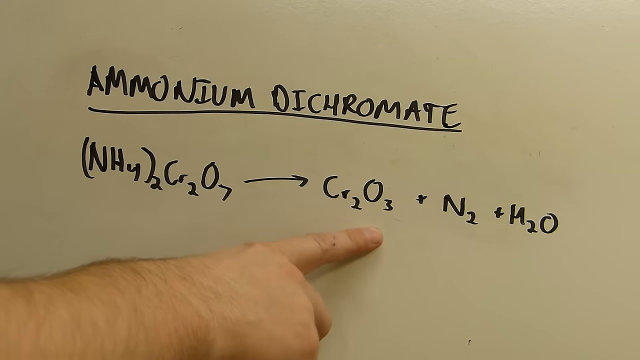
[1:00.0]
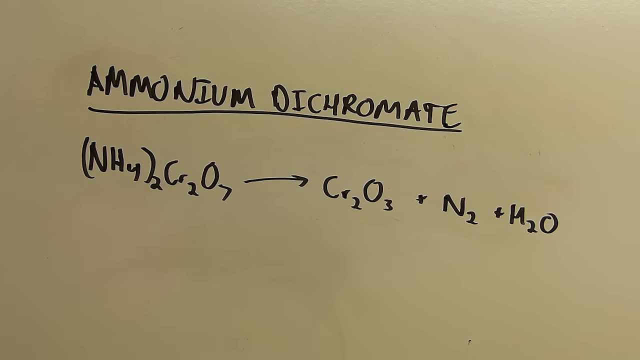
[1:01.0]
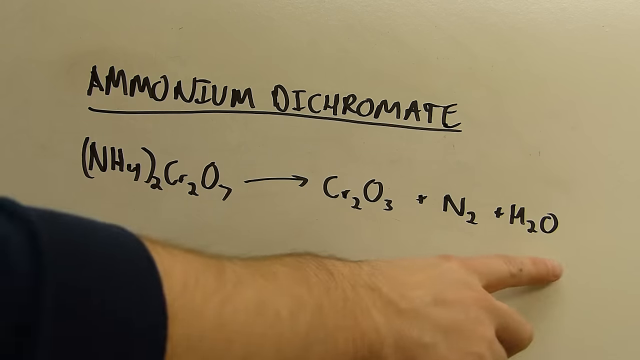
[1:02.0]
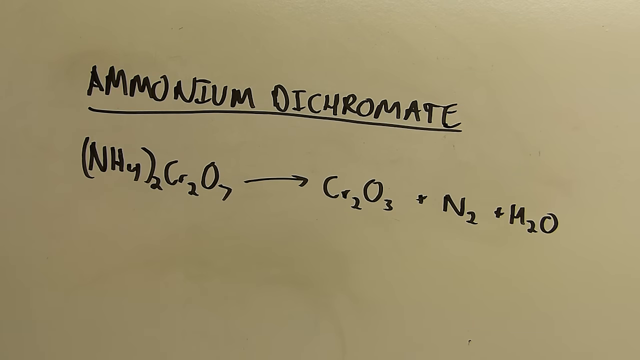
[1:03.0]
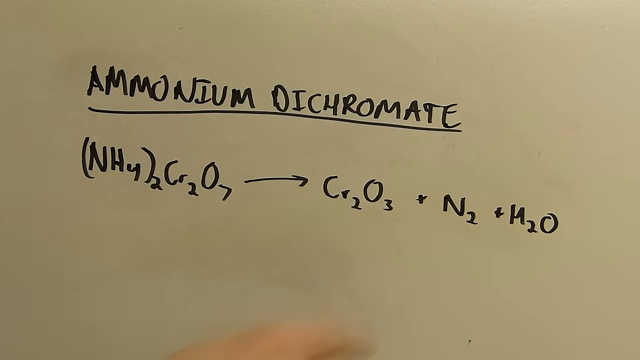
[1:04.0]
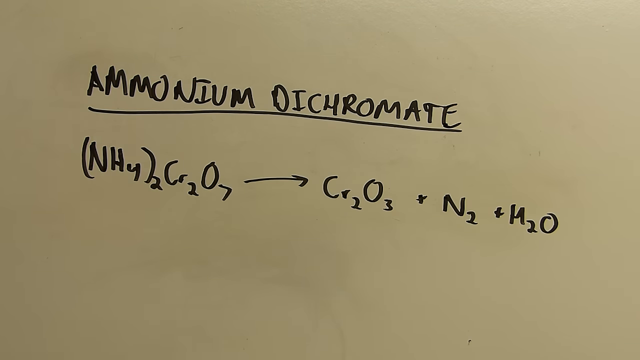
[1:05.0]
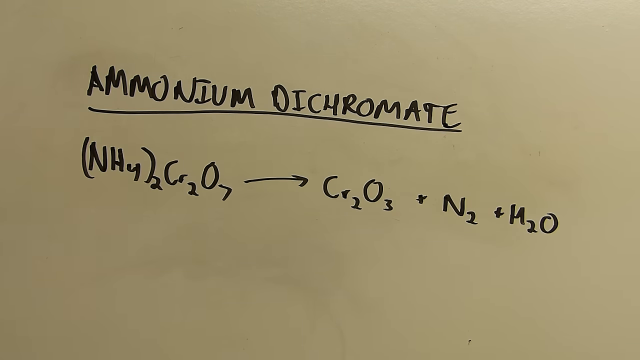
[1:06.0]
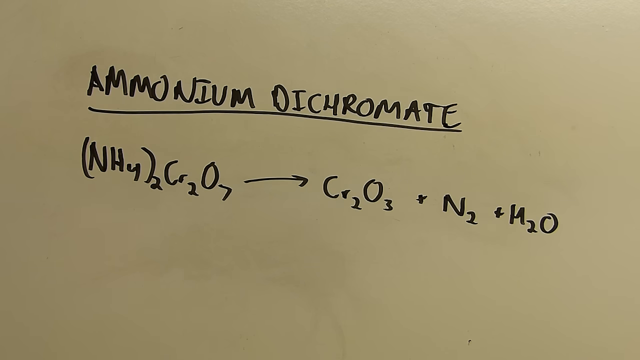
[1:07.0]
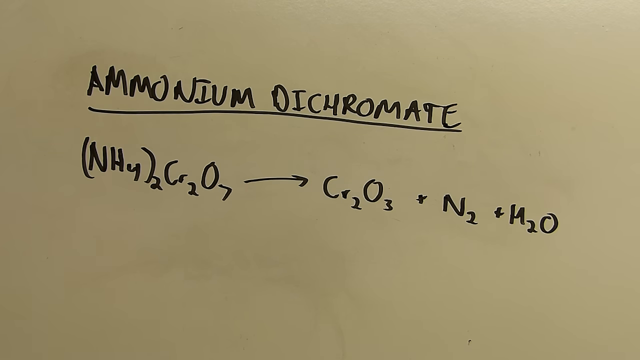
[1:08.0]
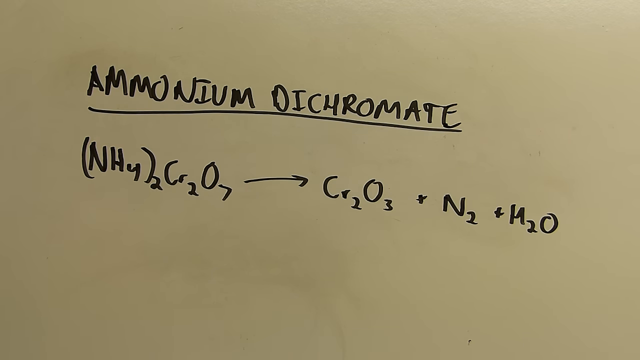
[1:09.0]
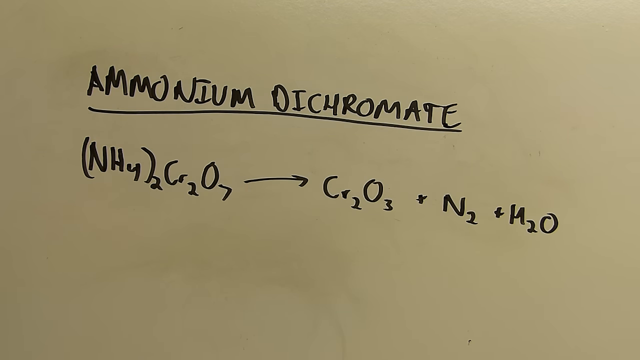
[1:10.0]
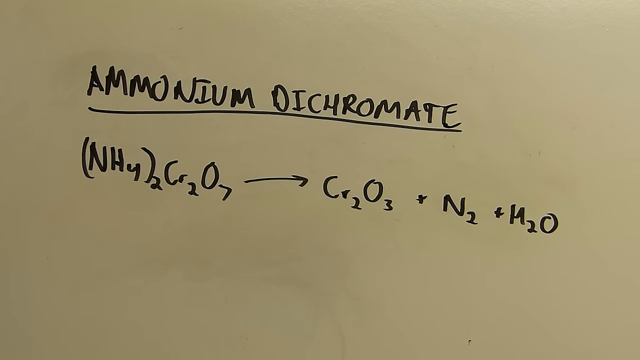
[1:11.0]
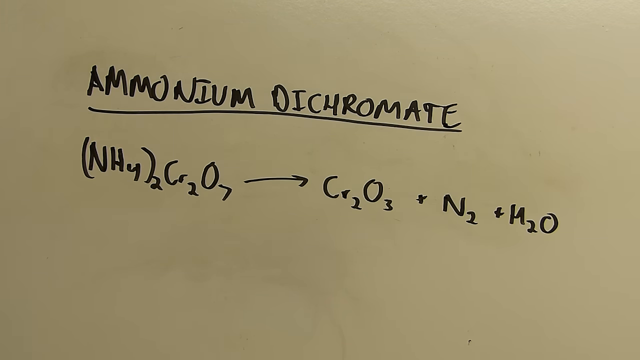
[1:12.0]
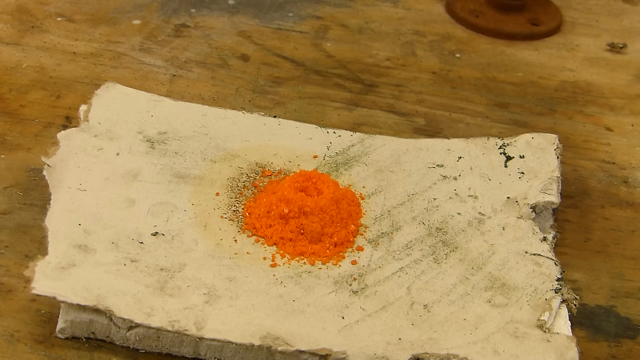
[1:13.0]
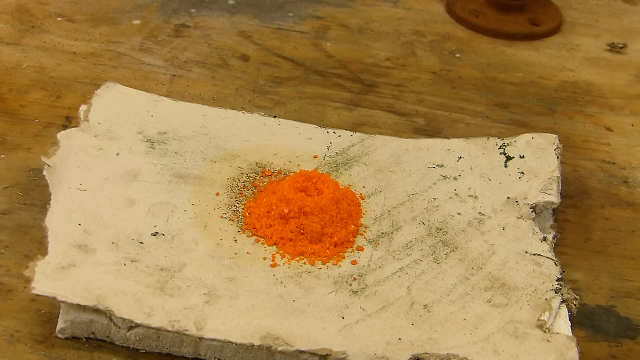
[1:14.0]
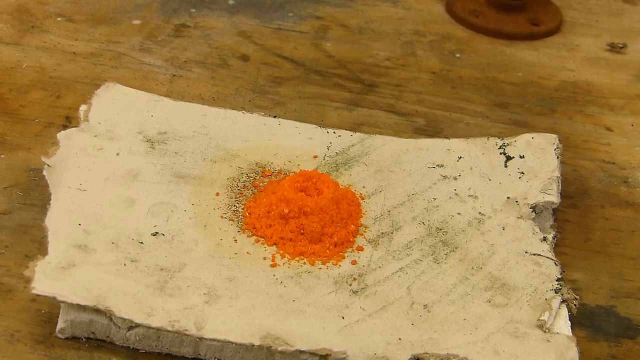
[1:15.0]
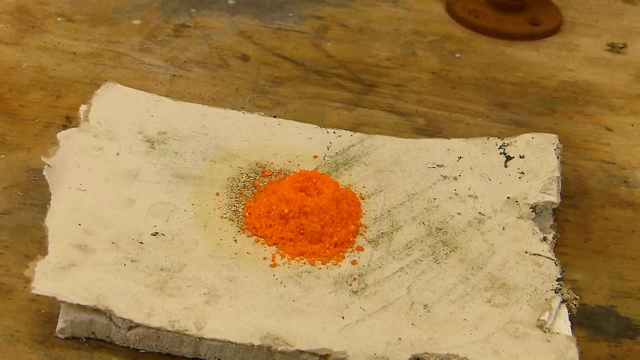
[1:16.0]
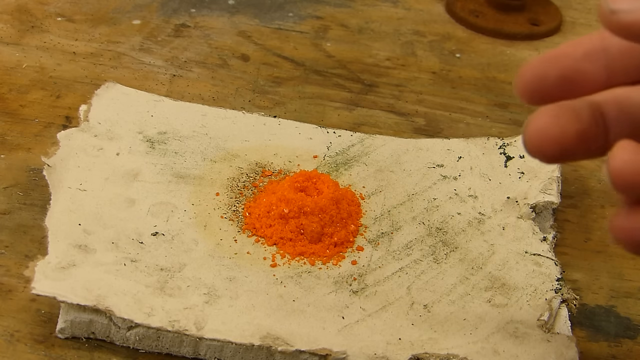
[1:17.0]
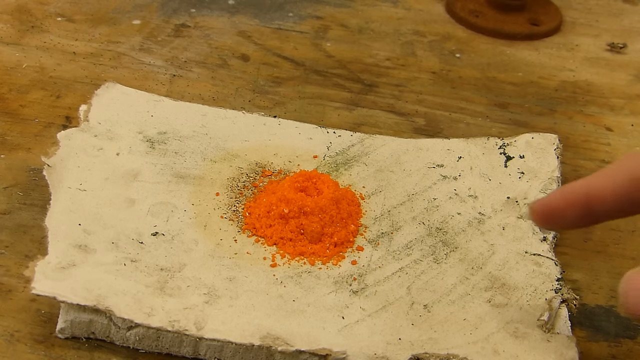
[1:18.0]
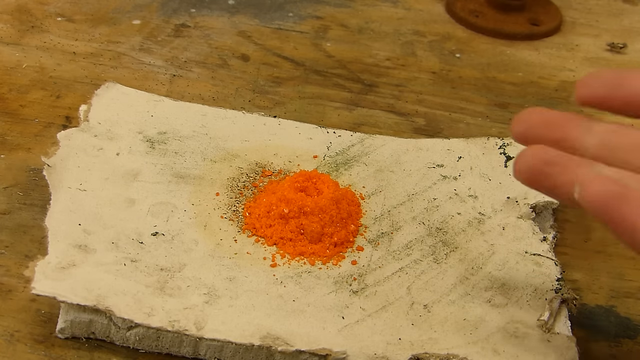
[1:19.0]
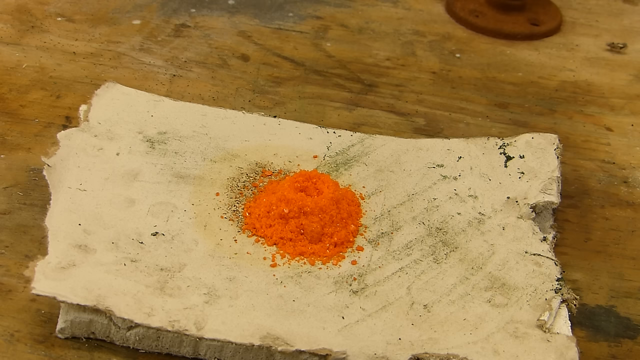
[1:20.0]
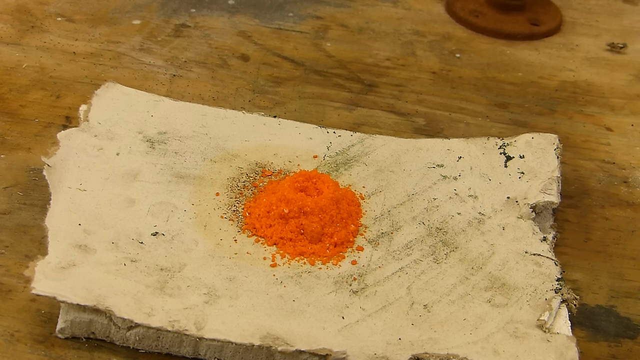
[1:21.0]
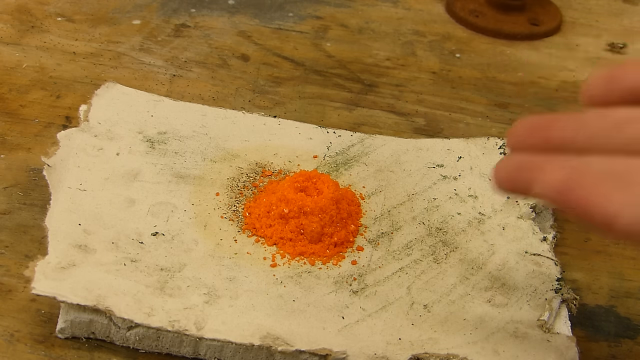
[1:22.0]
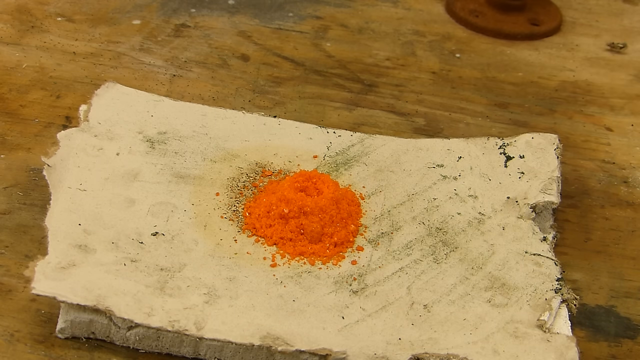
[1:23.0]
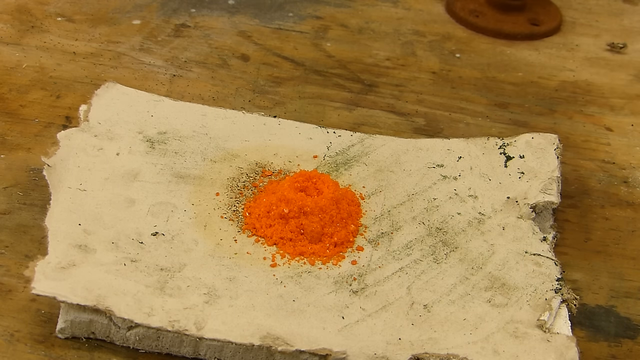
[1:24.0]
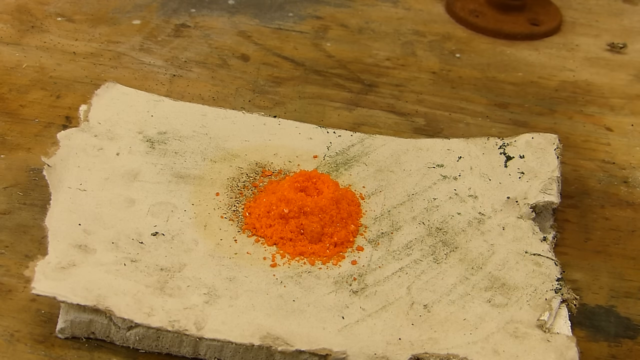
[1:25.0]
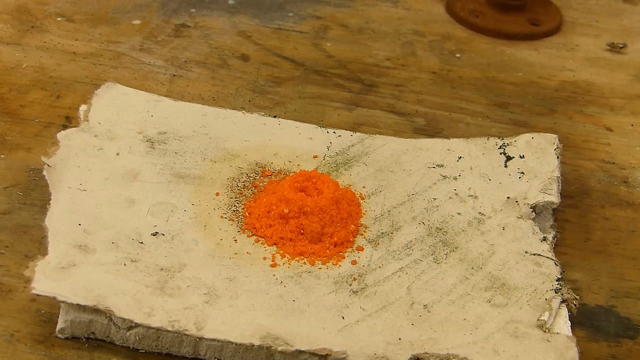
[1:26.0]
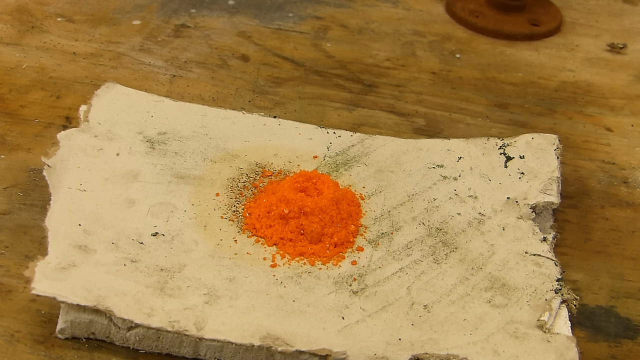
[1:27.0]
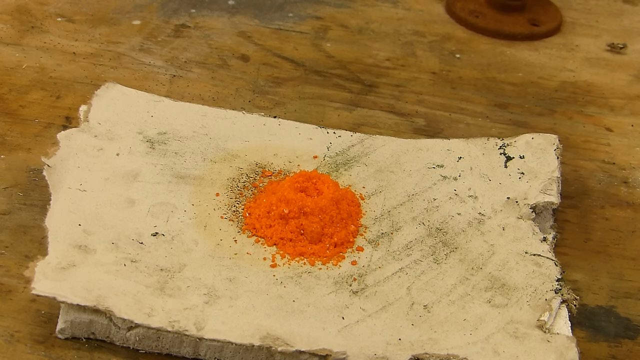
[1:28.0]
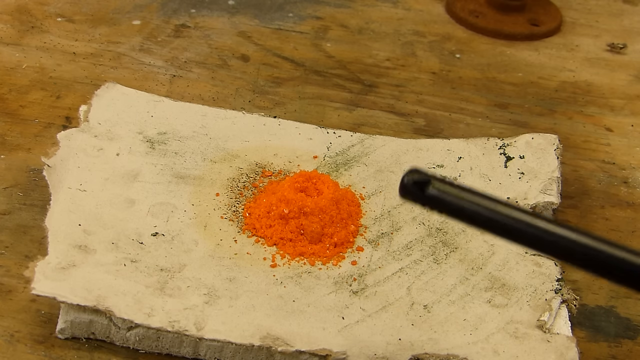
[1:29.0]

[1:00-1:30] A dry erase board is shown so zoomed in that its size cannot be seen. Written in black dry erase marker, in all capital letters and underlined, is "ammonium dichromate", with the formula underneath. On the left side is NH4 in parentheses, the ammonium, followed by the dichromate, Cr2O7. An arrow points to the right side, which reads Cr2O3 plus N2 plus H2O. He points at the Cr2O3 first, then at the H2O, then the N2. His hand comes from the left side, and part of his black sleeve is visible. The view then shows the orange pile on a white wooden piece, which is on a brown distressed wooden surface. At the very end, a black lighter comes in from the lower right side.